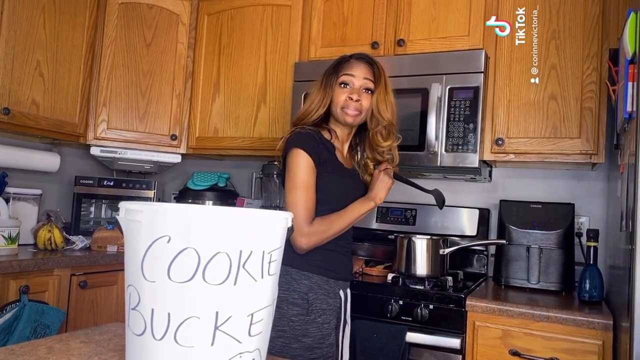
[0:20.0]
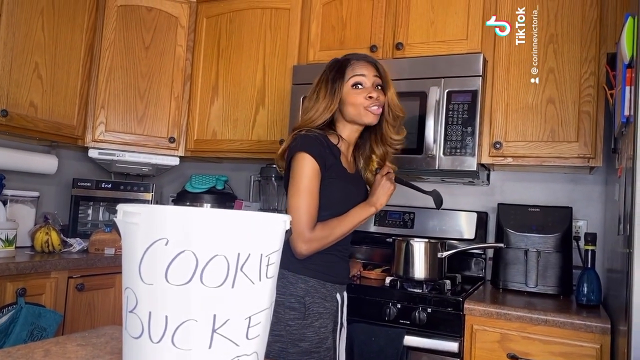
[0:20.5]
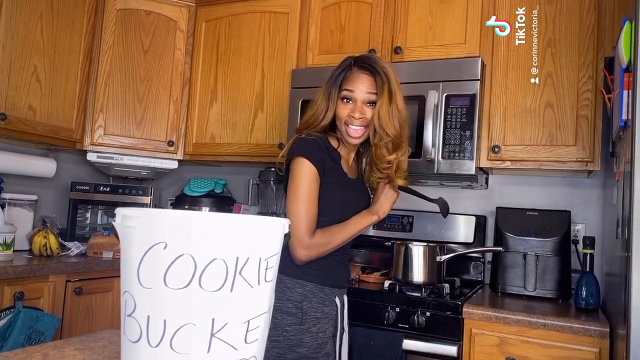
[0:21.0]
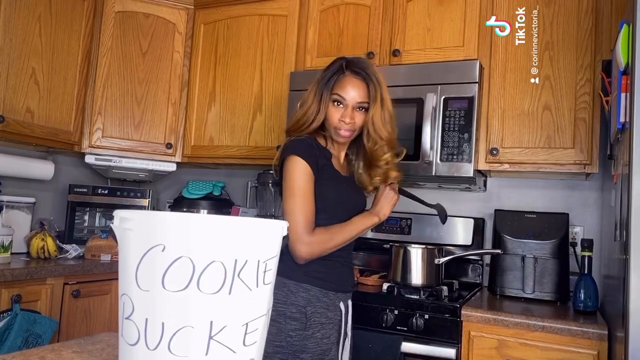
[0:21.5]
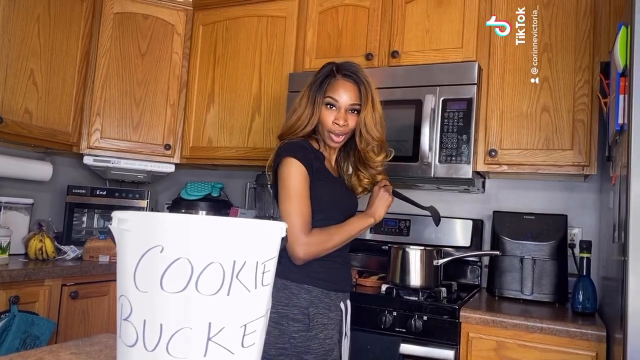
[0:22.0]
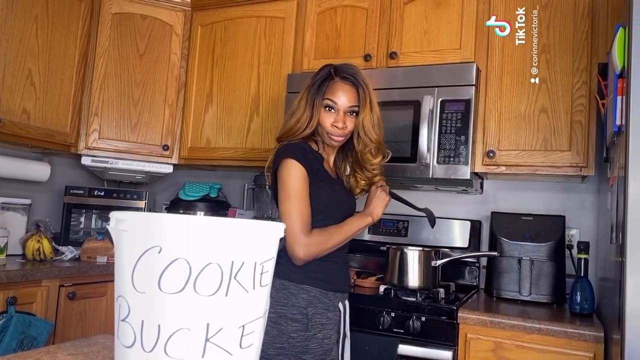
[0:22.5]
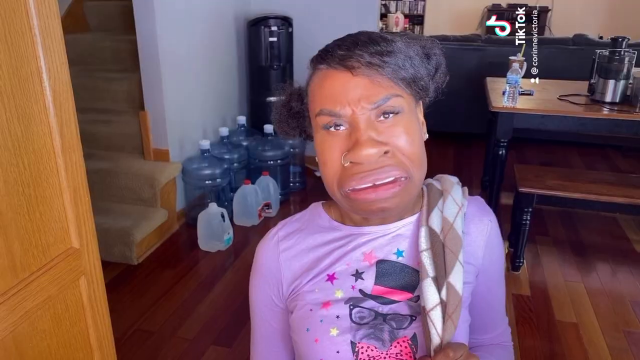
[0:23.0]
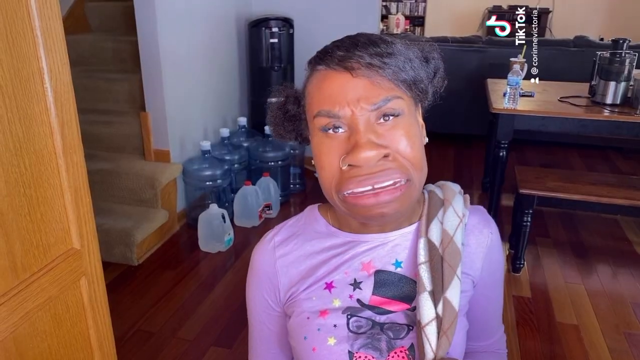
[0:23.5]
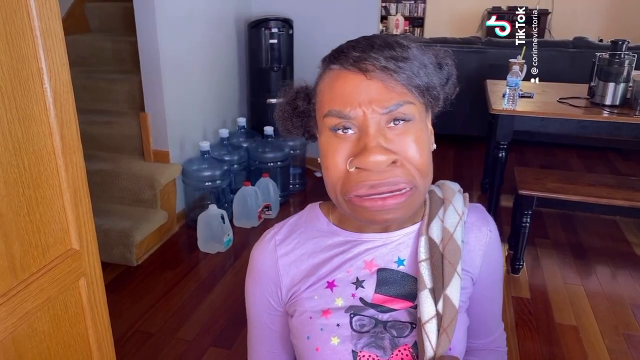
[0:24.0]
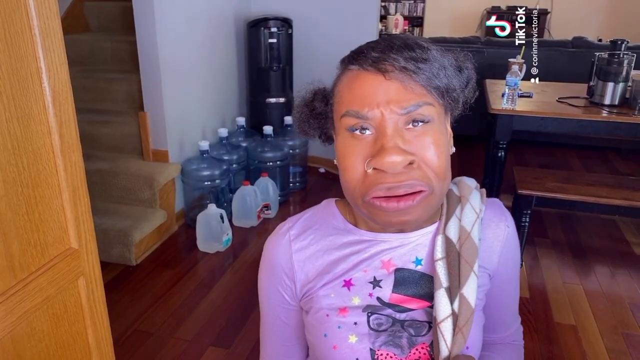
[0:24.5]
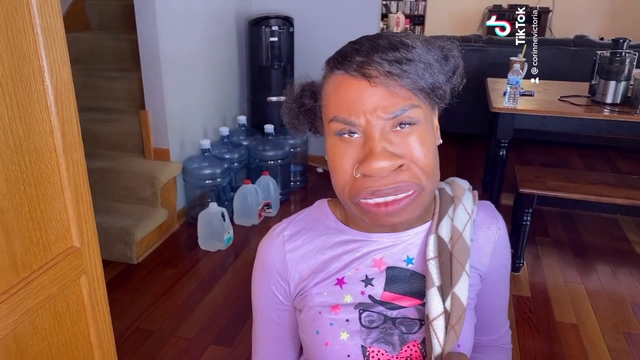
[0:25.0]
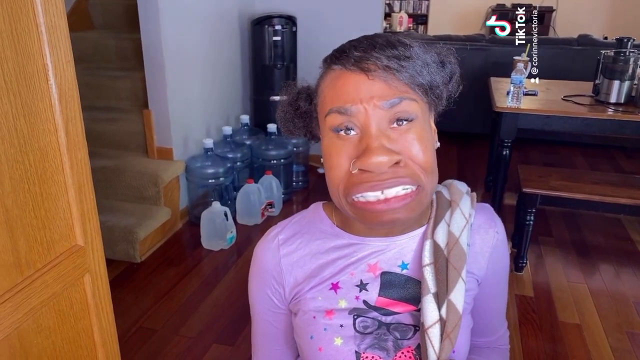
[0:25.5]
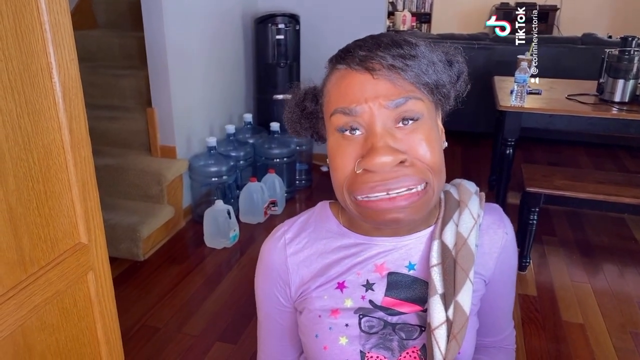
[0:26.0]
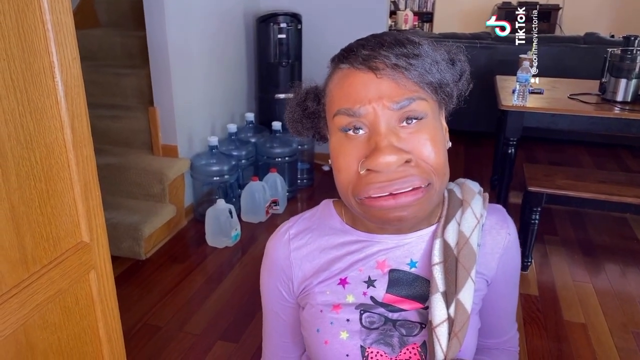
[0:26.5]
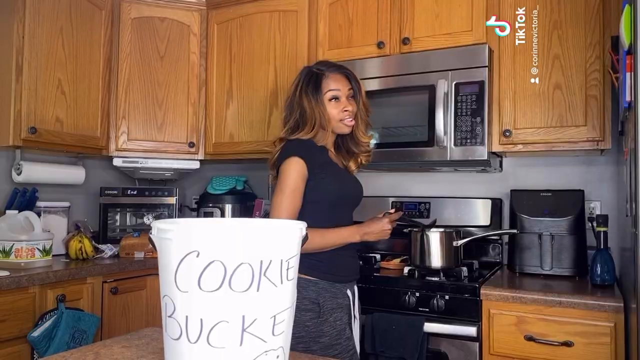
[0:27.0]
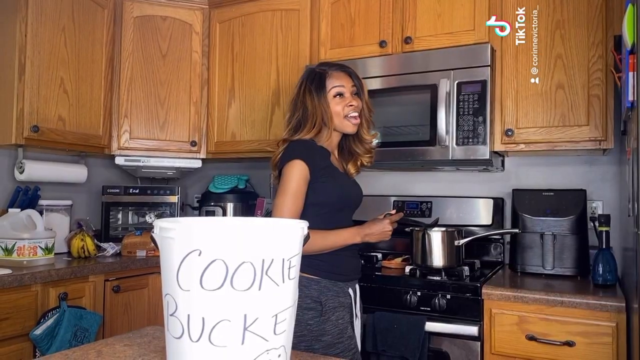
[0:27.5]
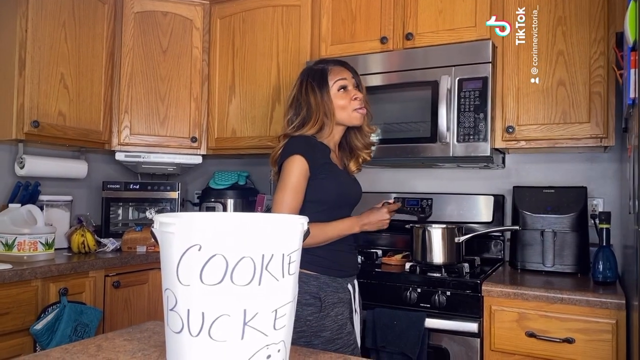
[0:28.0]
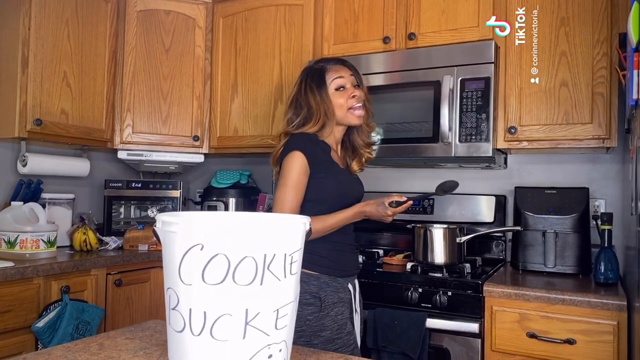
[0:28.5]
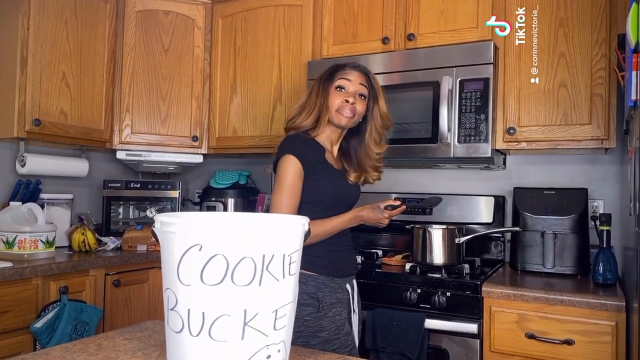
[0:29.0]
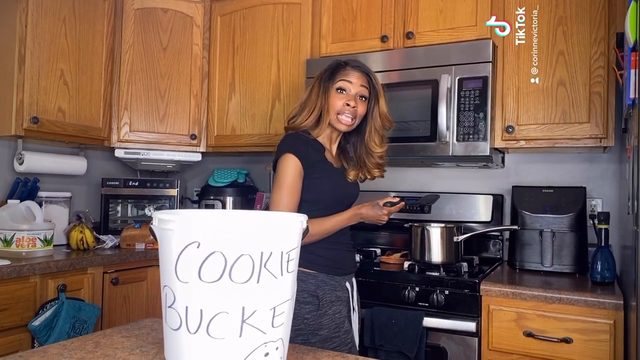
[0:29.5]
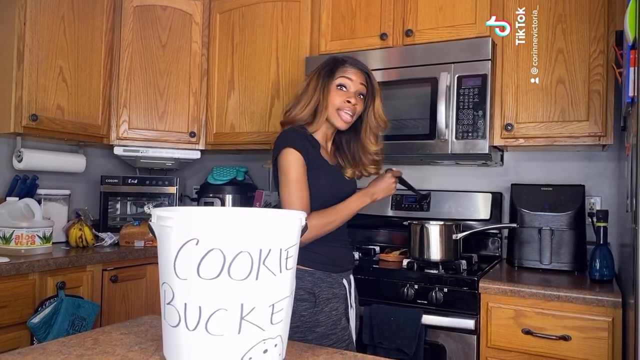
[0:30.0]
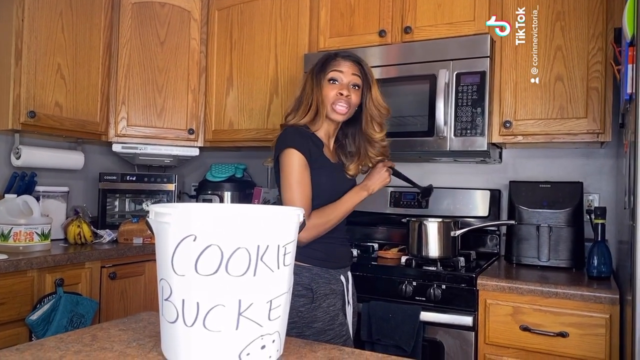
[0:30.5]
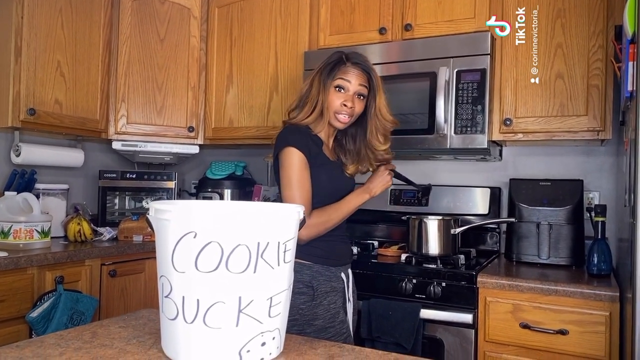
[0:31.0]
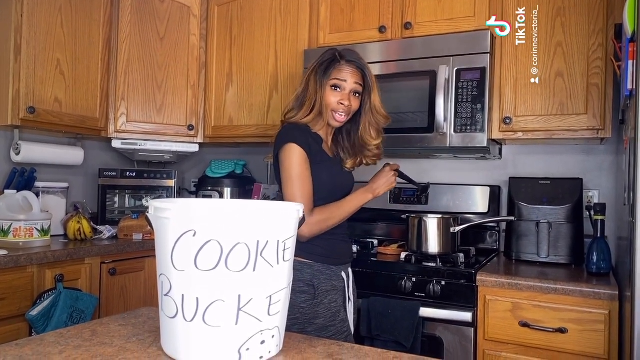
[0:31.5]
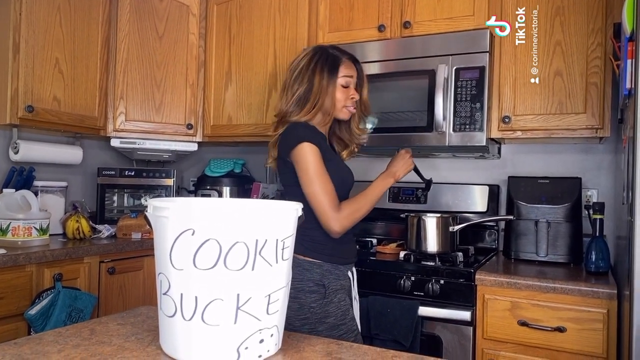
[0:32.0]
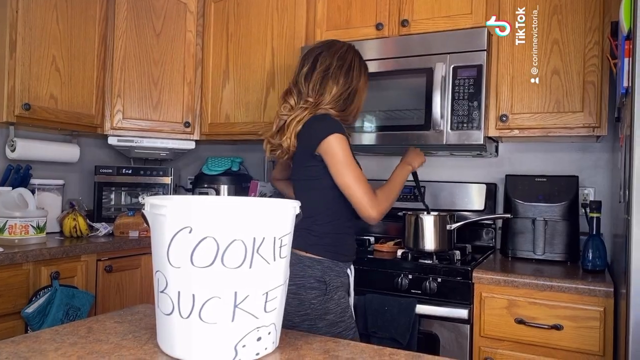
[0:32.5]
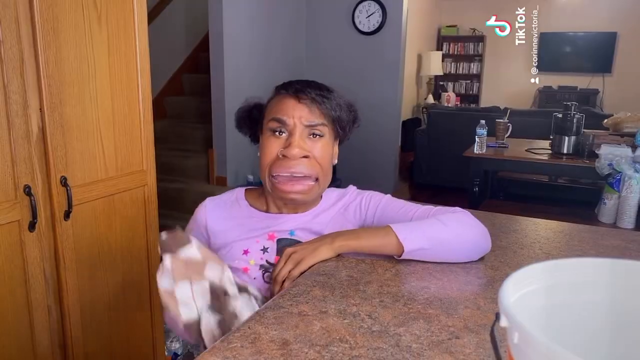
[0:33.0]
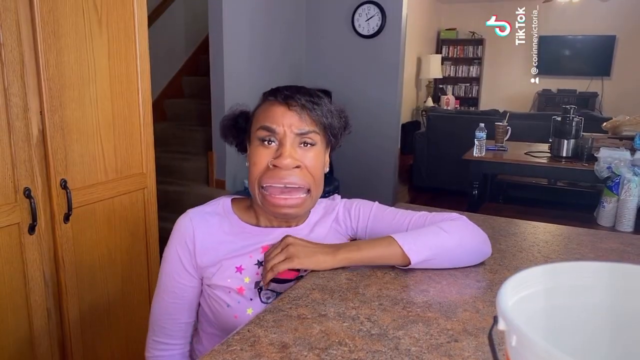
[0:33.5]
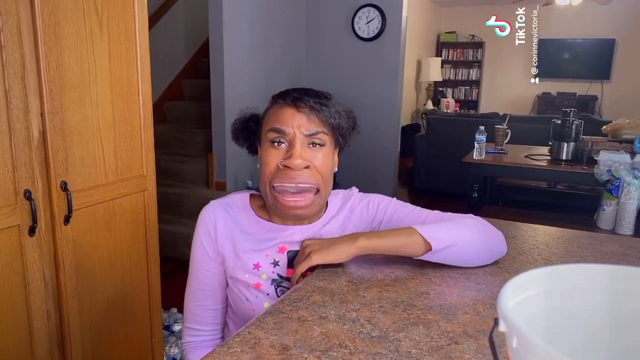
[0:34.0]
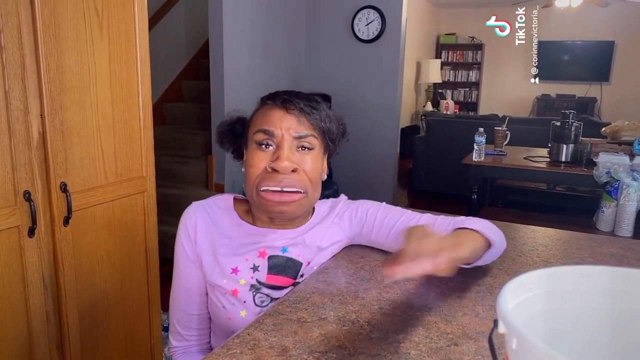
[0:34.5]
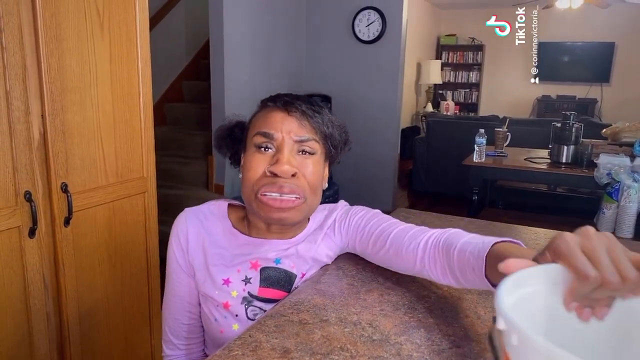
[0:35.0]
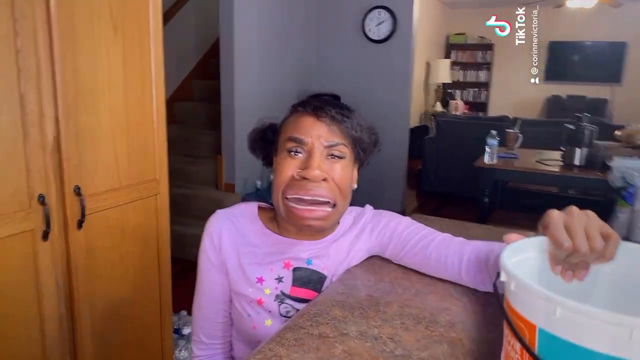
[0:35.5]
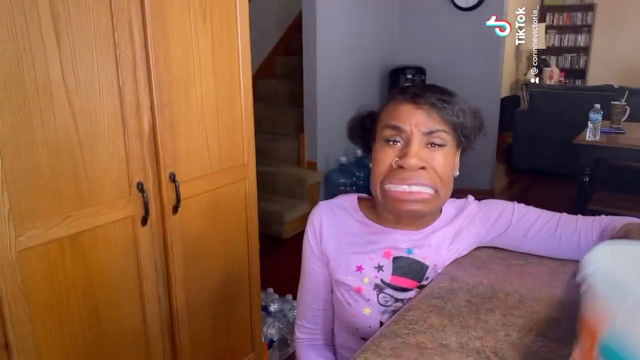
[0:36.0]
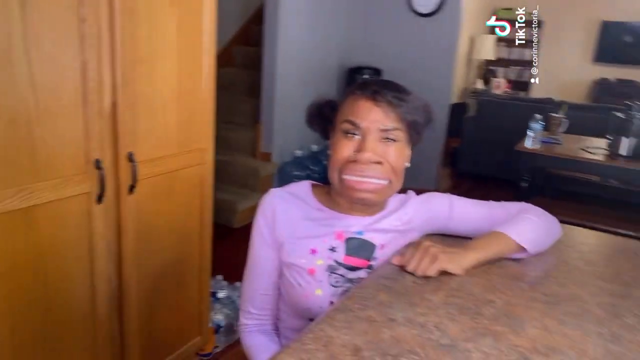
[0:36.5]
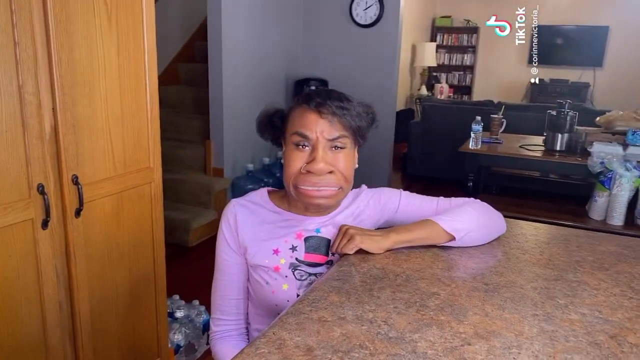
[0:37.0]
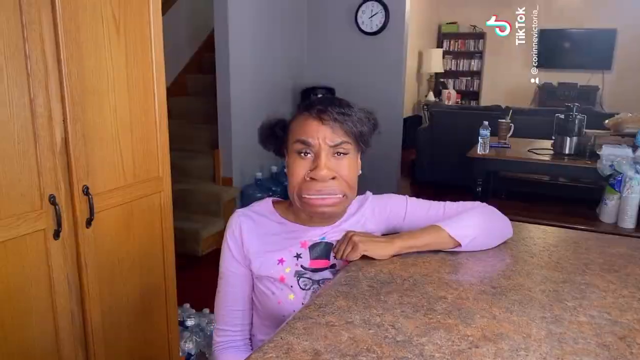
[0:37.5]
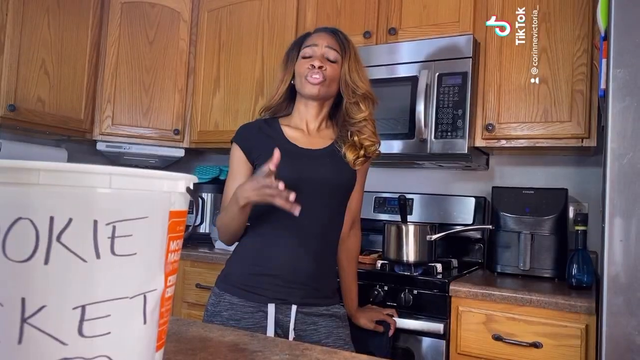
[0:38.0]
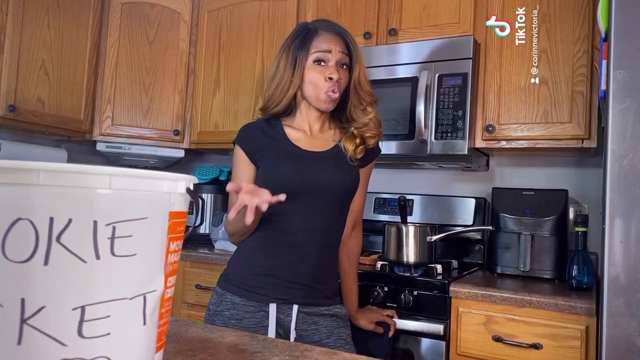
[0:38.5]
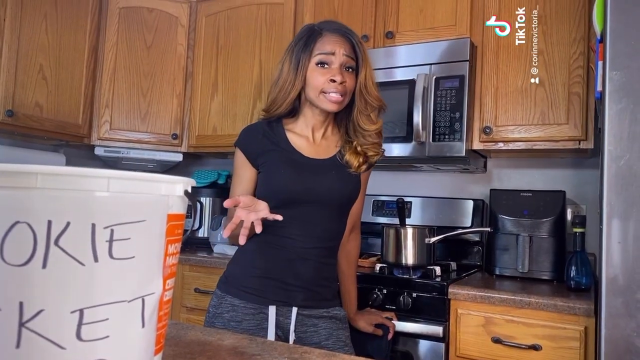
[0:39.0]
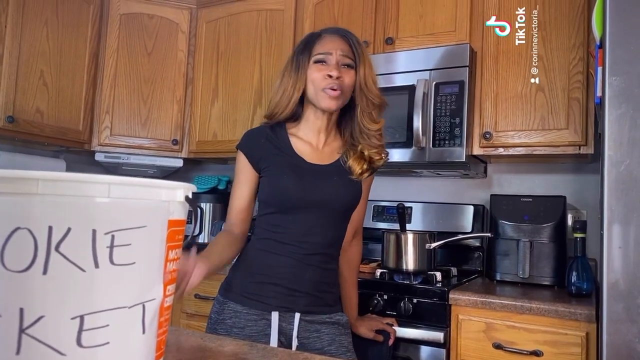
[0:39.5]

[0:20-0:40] A woman stands in the kitchen wearing tight gray pants and a tight black shirt. She has goldish brown hair and is of African-American descent. On the counter behind her is a bucket that says "cookie bucket." With a lot of attitude and sass, she tells a little girl who has come in wearing a facial filter and a pink shirt that she will do what she is told, won't eat the bucket of cookies until after supper, and will have to clean her room and the rest of the house if she can't act right. The little girl gets upset and grabs the bucket of cookies. The woman says, "I told you no. That's the end of that. You know I'm the boss. You can look at me and tell."